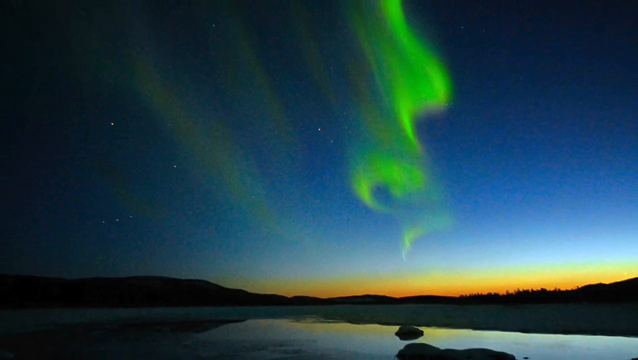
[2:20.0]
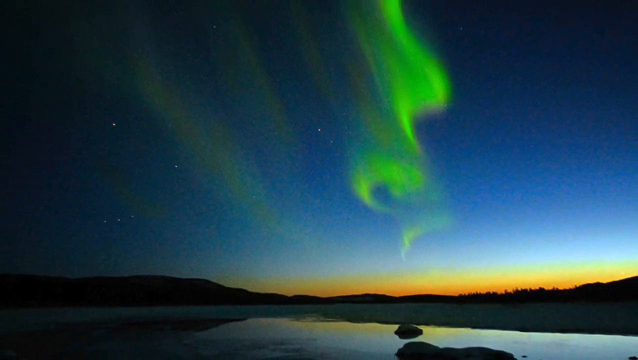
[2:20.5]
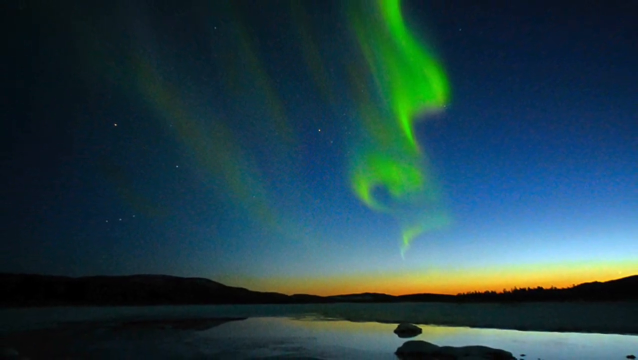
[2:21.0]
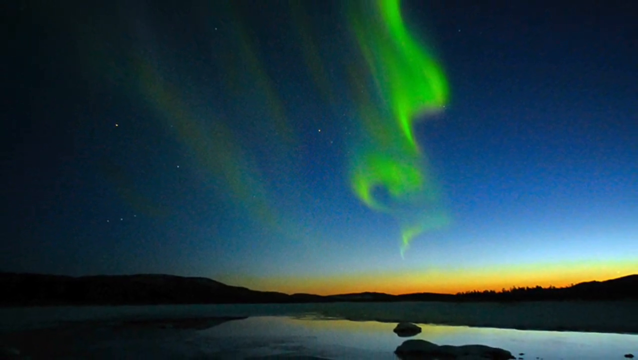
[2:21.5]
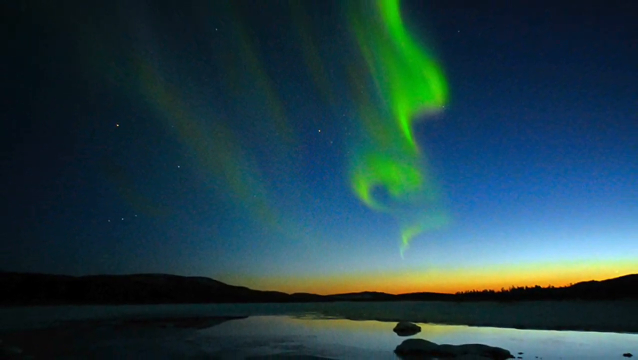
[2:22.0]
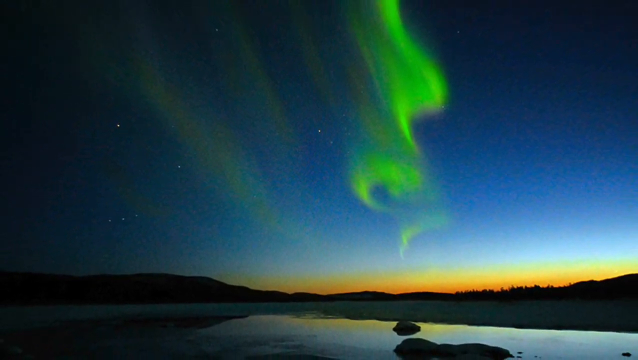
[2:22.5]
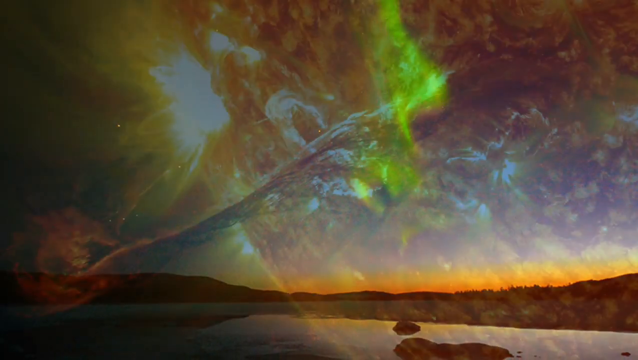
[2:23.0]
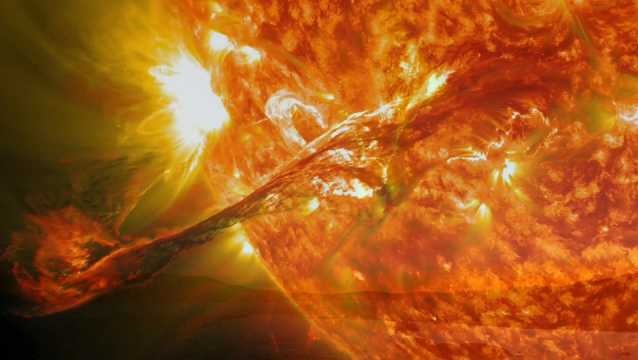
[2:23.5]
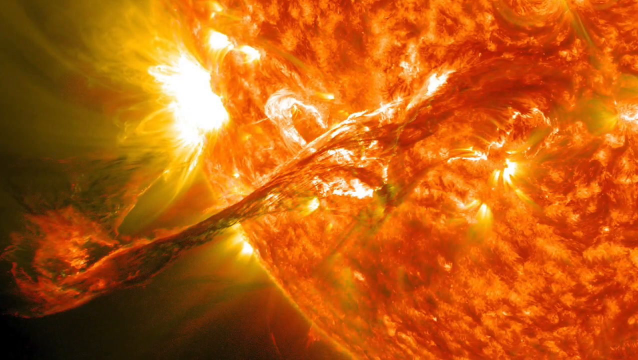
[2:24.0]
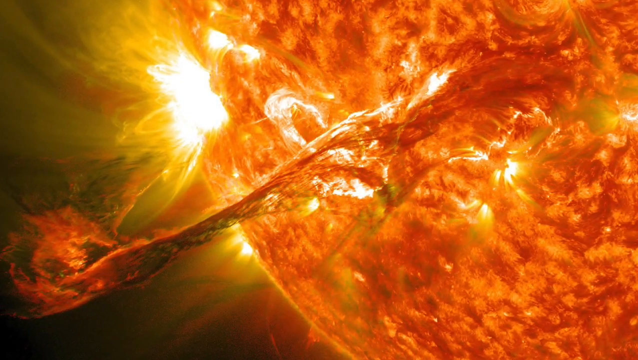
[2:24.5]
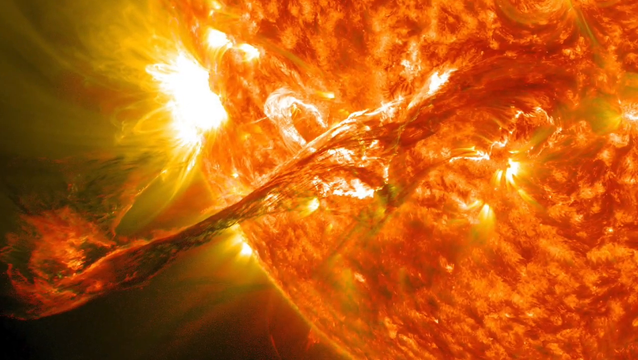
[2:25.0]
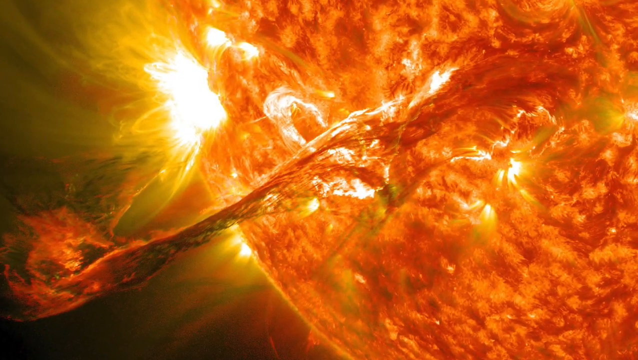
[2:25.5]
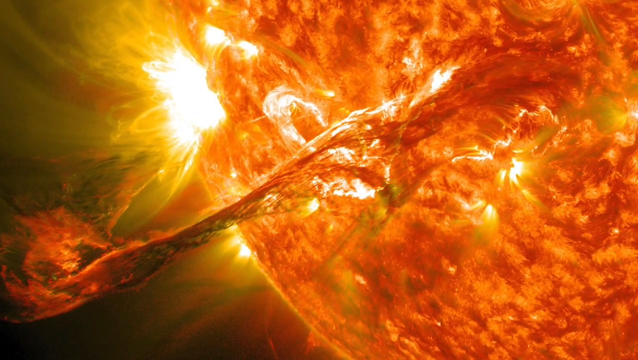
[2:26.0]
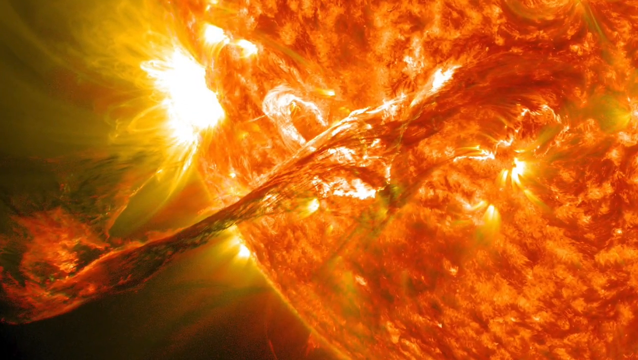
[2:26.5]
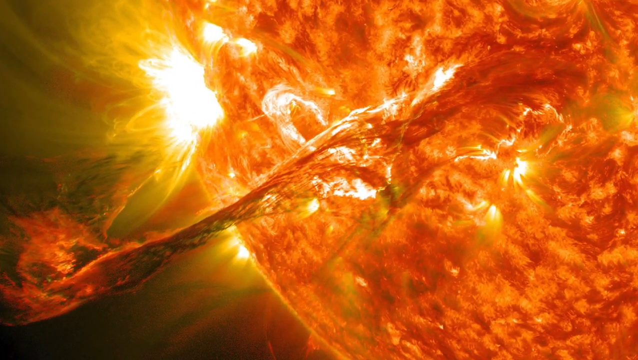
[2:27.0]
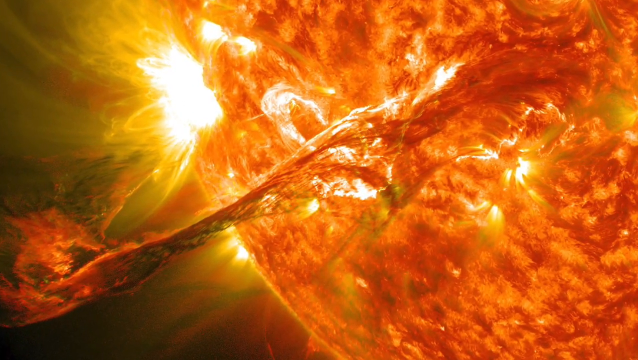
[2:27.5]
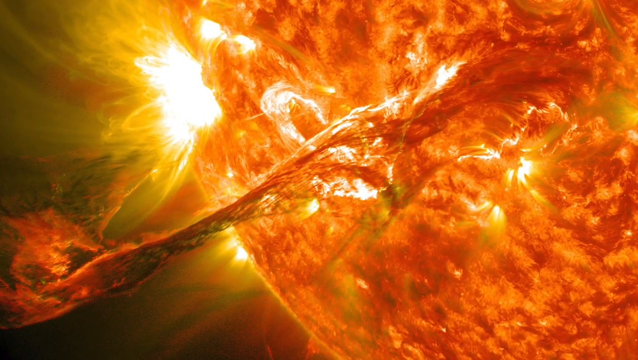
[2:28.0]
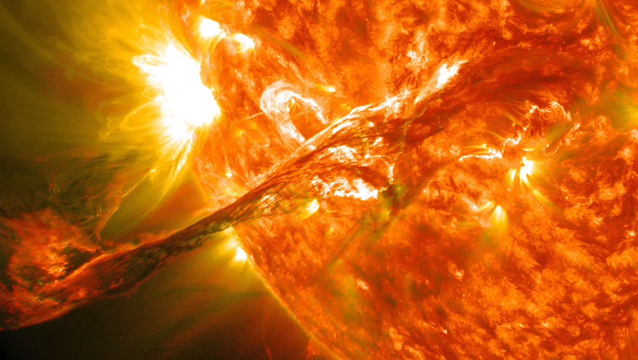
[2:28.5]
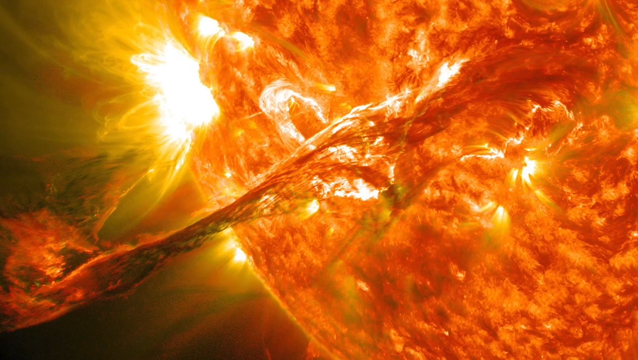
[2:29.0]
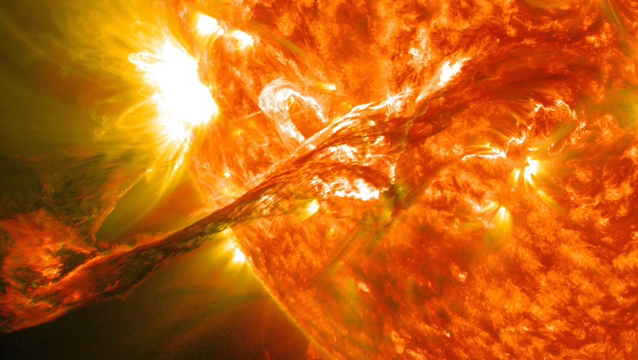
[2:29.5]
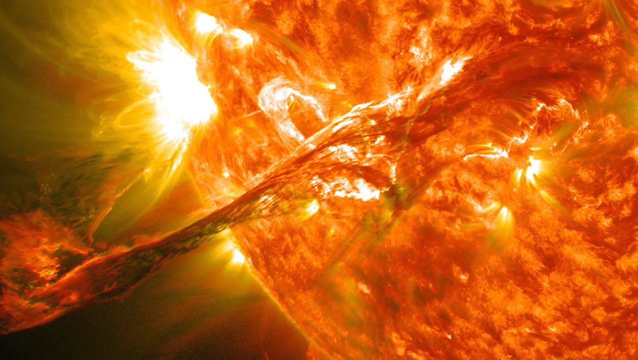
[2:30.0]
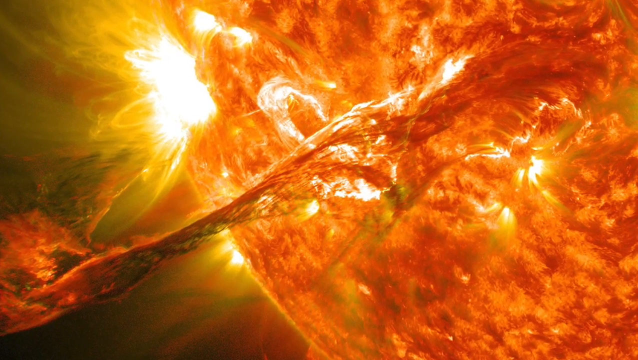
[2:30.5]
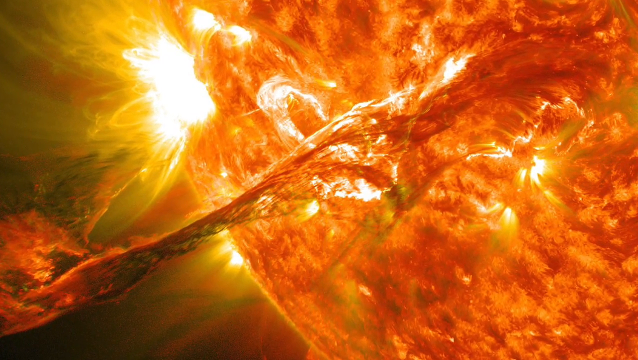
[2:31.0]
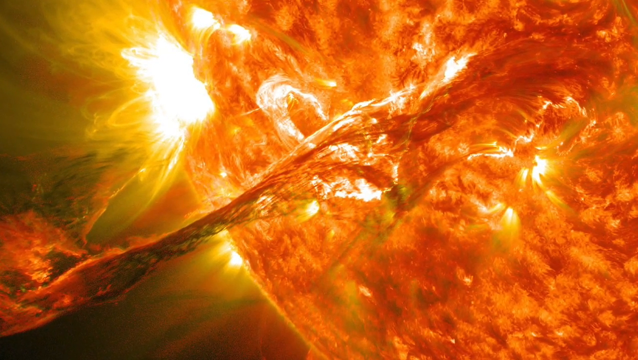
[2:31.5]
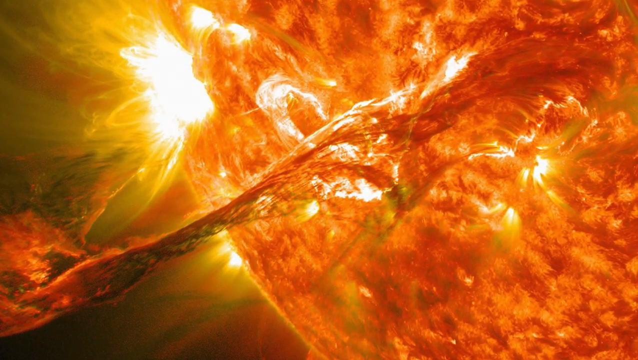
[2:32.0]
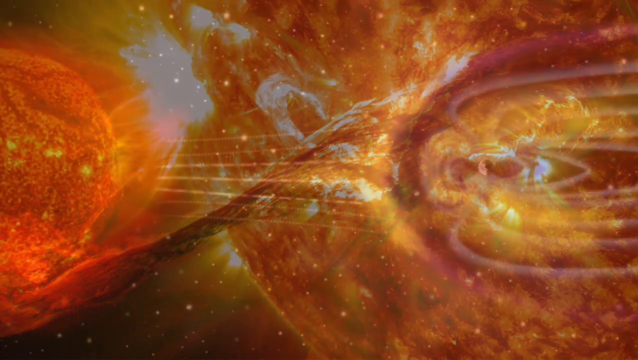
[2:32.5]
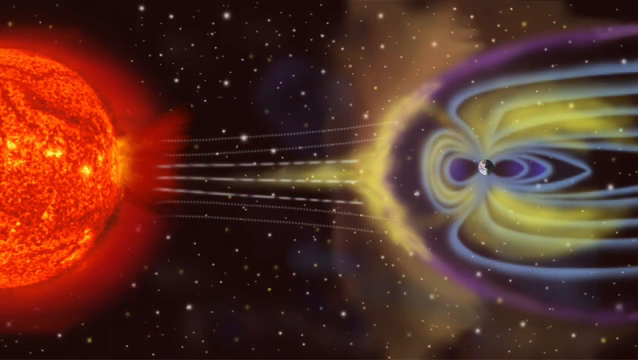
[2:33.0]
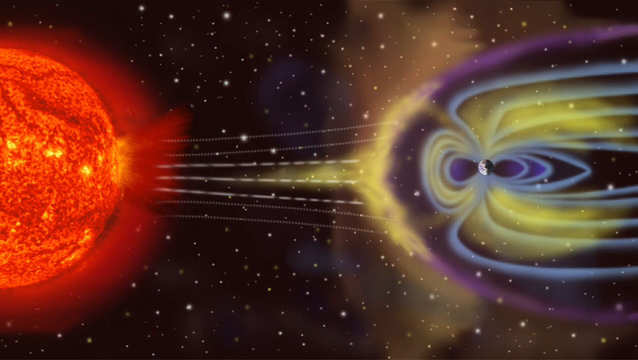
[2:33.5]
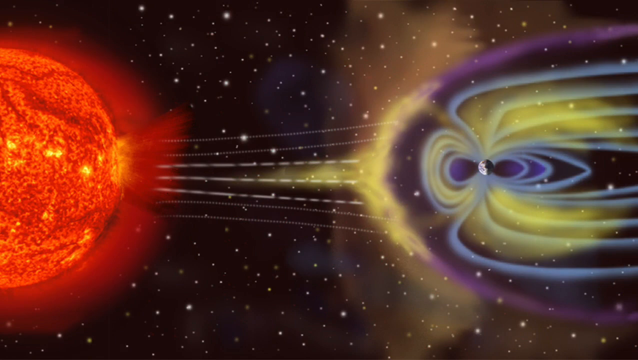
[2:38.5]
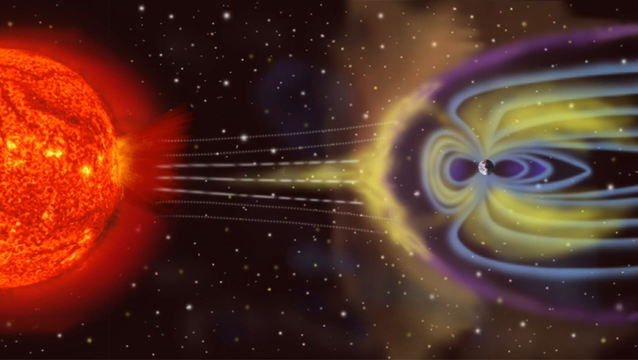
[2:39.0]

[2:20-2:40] A graphic shows a red ball-like mass, an unidentified red surface covering the whole screen that appears hot. Later a spherical red-hot image on the left side of the screen apparently represents the Sun, with a few arrows drawn from it. A purple image shows rays converging on a representation of the Earth, a small round circle, from which yellow and purple rays seem to diverge, with some converging on it on the side the Sun's rays come from. There are a few stars in the background, and lines drawn from the orange or red-hot Sun toward the Earth apparently show how the aurora is formed.